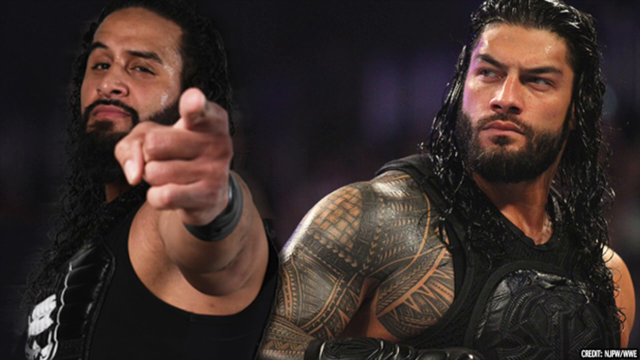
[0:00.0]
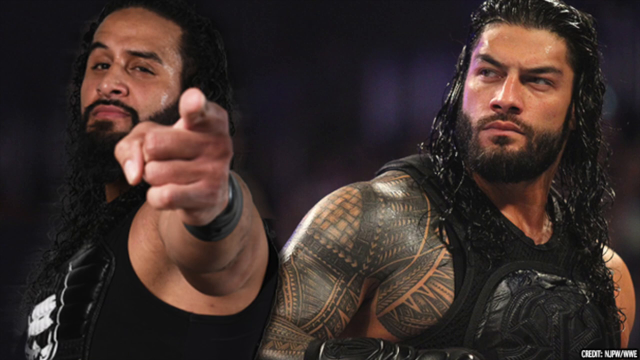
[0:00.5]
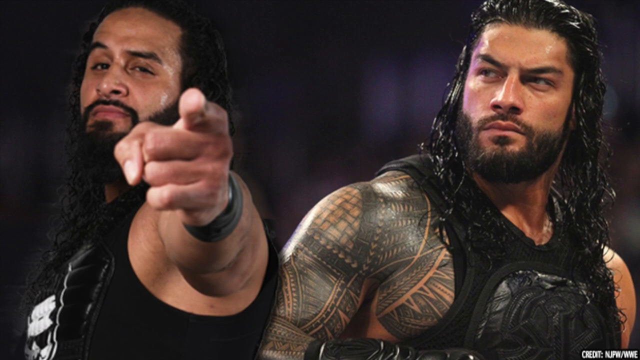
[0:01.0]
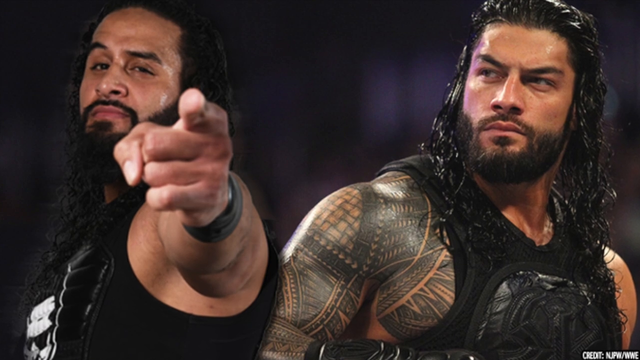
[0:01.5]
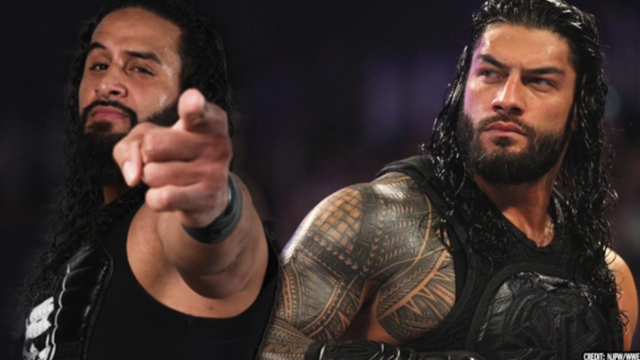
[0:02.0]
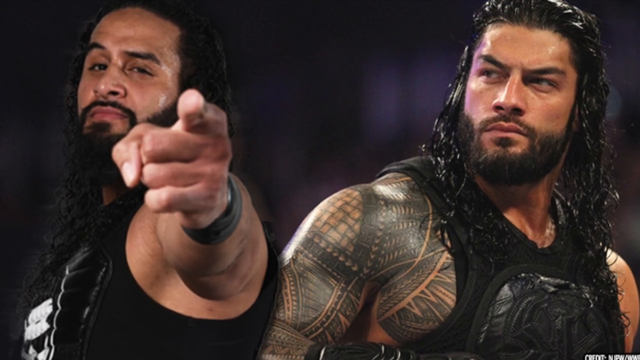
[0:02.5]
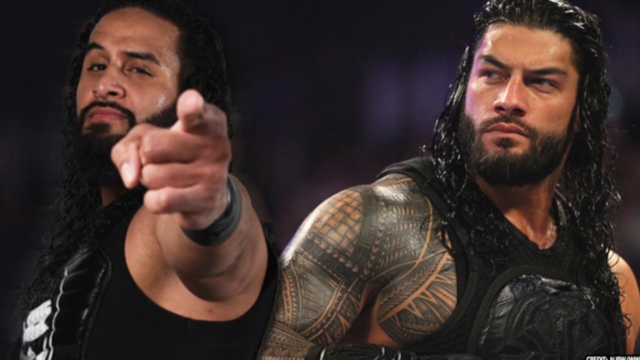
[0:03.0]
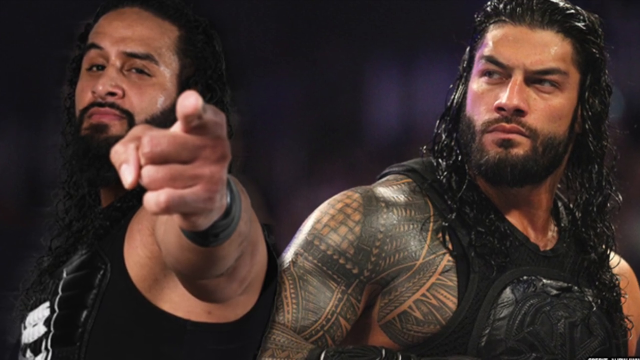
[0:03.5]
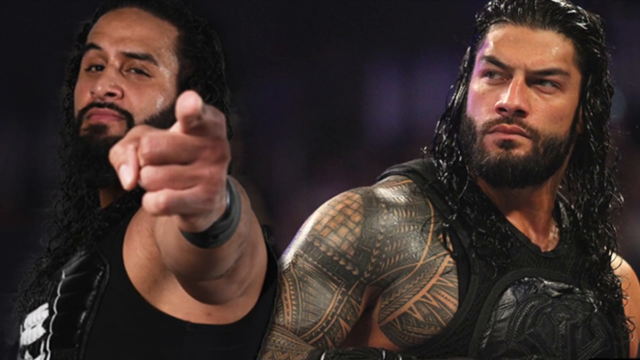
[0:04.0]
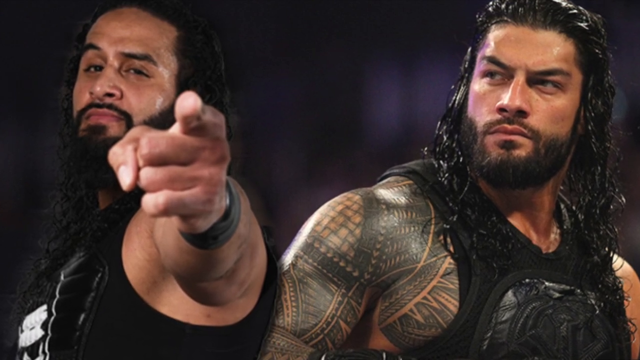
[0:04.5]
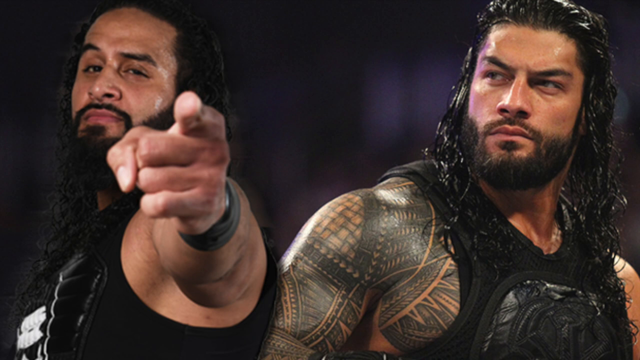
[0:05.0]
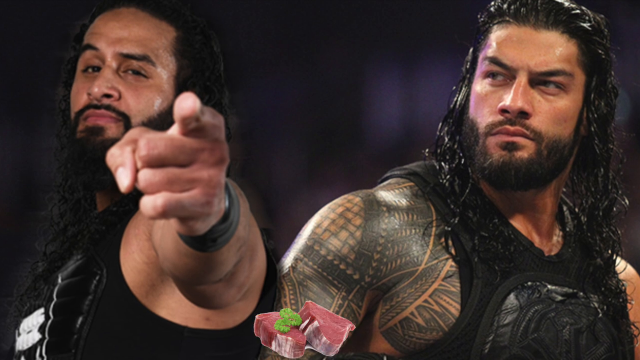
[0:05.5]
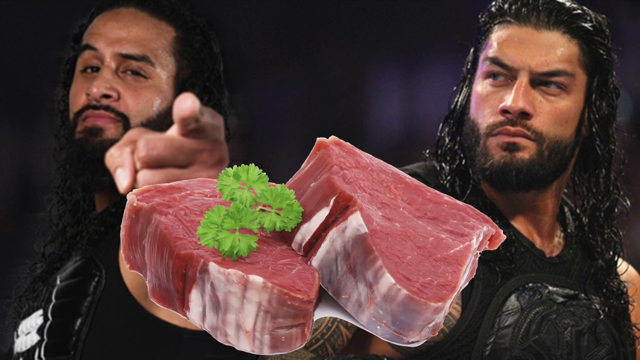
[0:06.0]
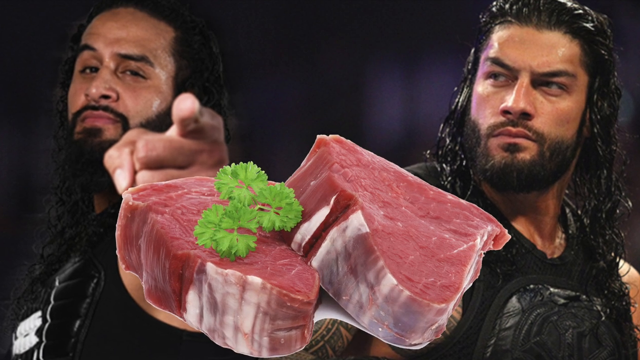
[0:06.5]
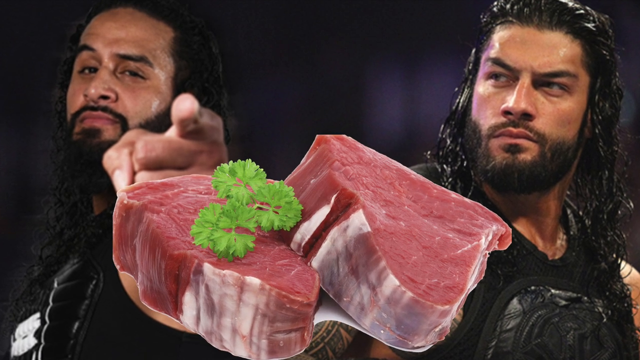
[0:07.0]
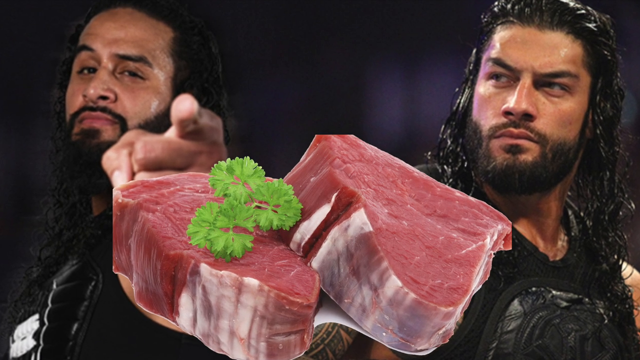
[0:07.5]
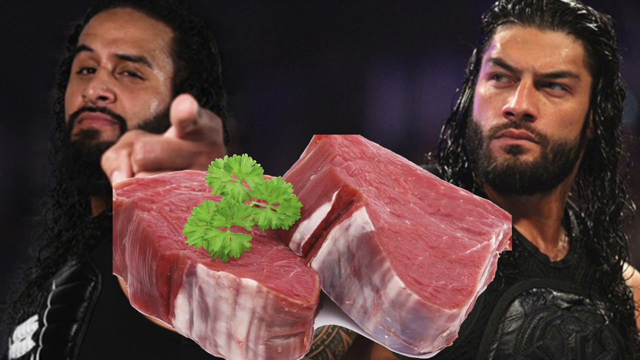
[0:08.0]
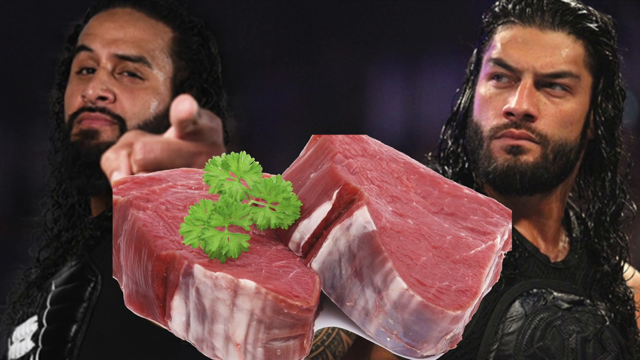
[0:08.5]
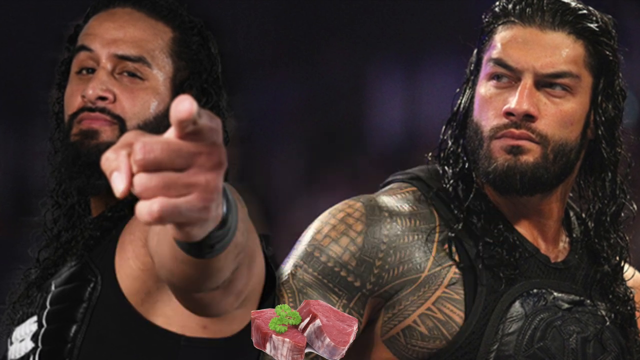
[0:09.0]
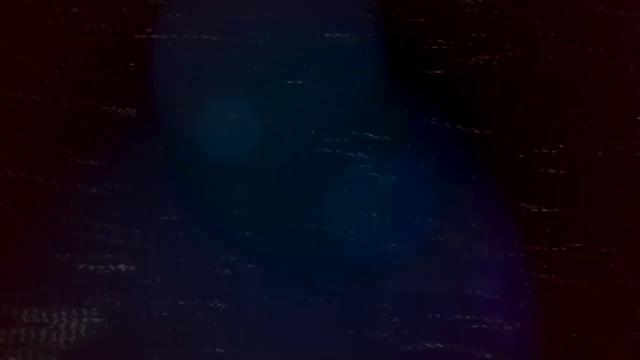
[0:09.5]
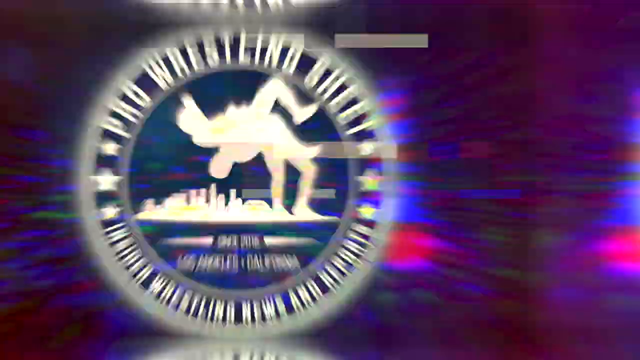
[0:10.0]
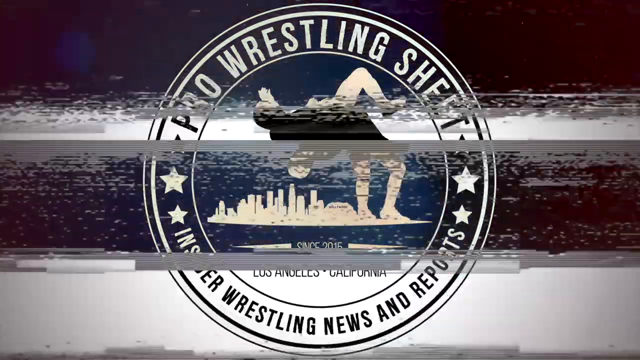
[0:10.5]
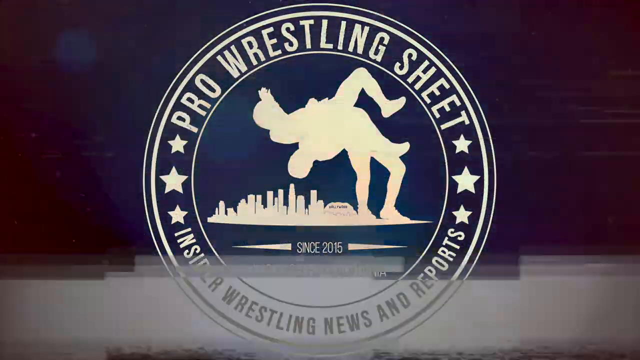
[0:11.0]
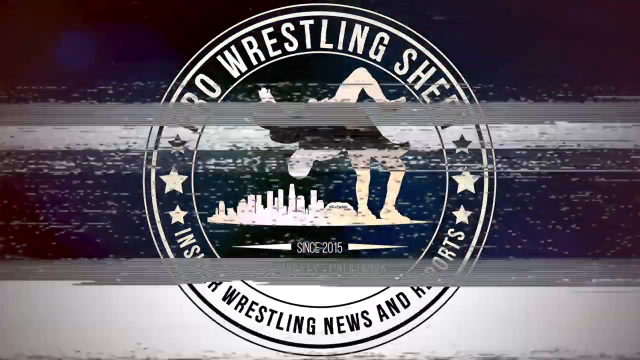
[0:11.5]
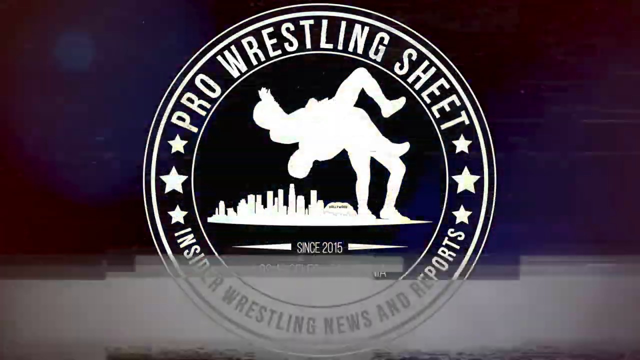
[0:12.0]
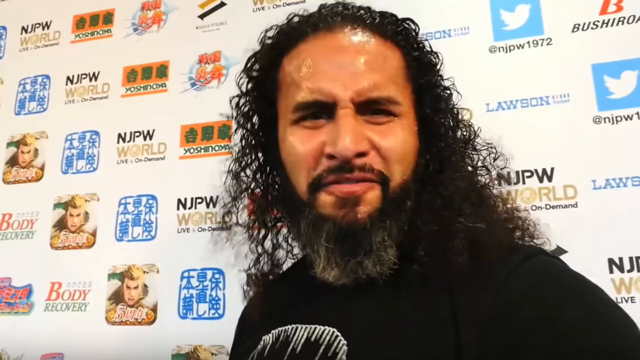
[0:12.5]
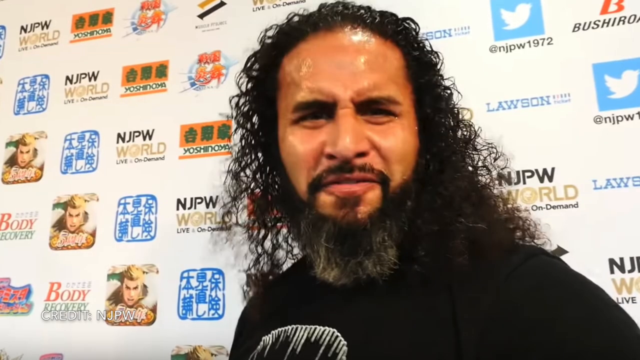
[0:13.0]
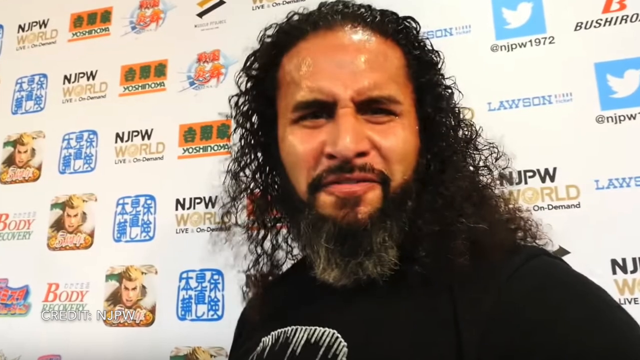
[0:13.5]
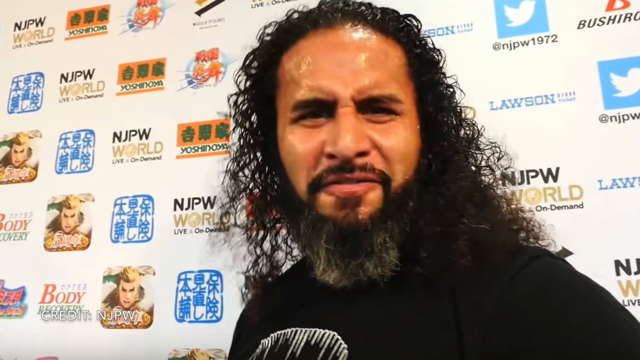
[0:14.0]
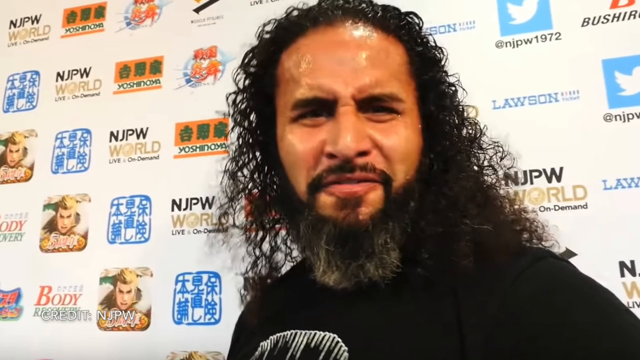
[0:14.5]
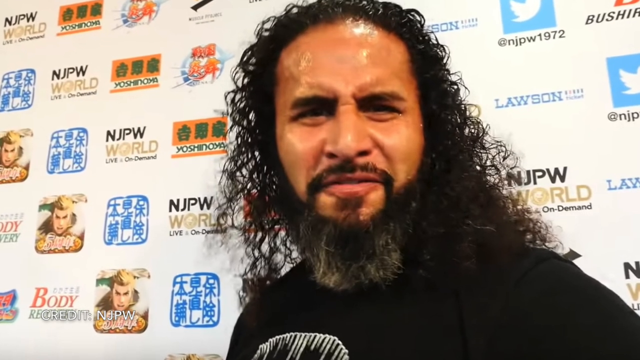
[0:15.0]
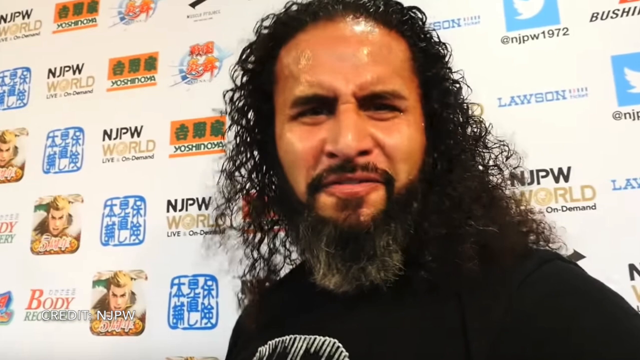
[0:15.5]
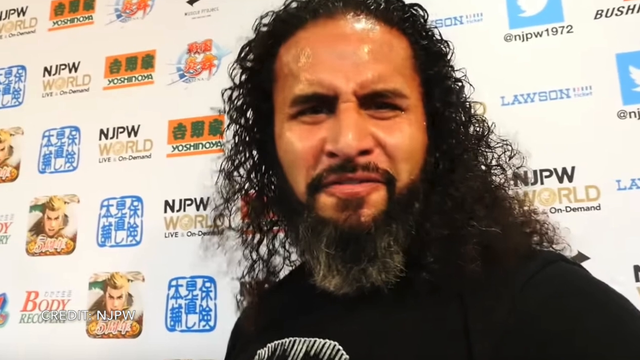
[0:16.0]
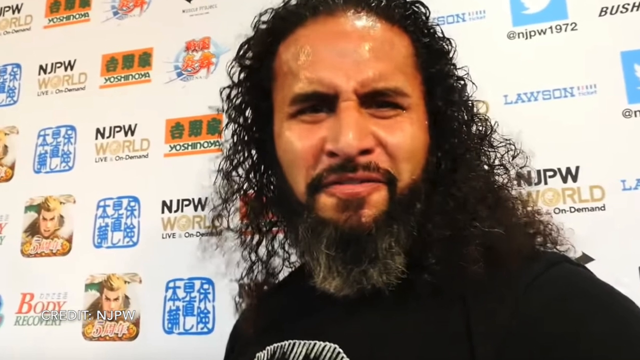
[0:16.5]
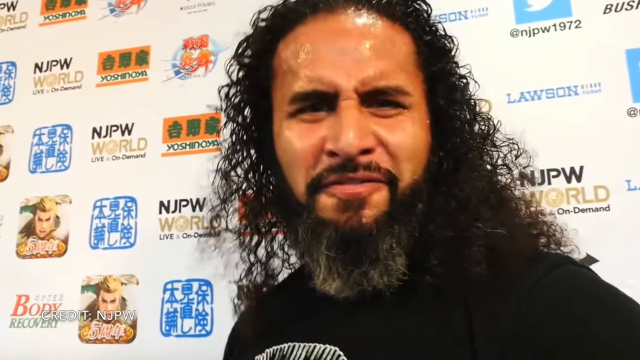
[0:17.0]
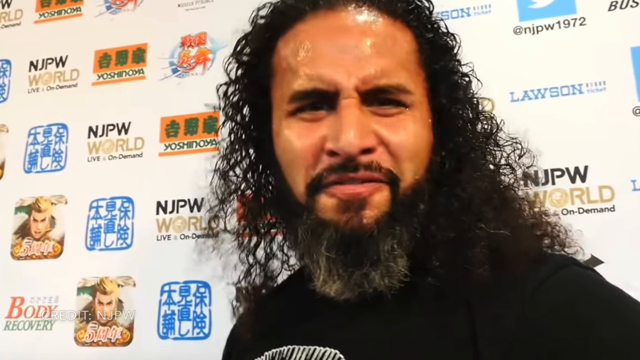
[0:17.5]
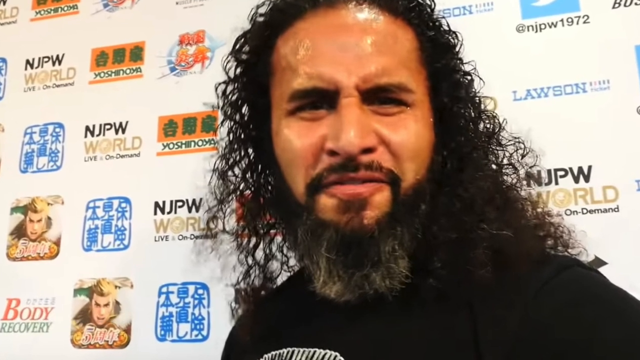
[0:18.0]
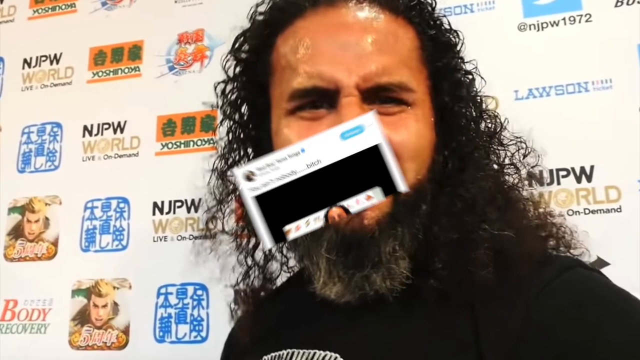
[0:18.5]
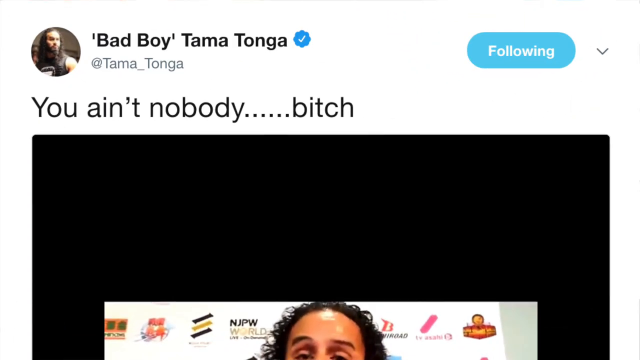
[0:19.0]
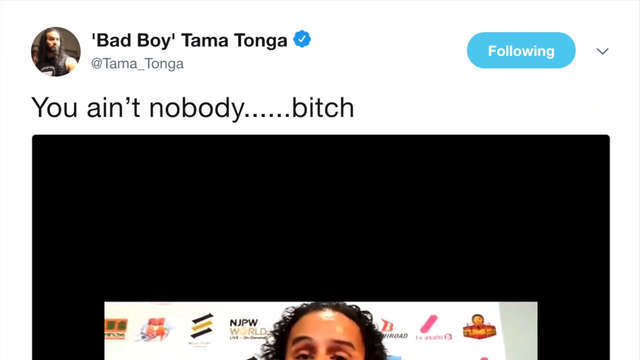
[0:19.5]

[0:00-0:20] A picture shows two guys pointing toward the camera. Both appear to be WWE wrestlers, and both have beards and long hair; they could be the same person. One is wearing a vest and the other is wearing something like a tank top. The video cuts to two raw, uncooked steaks in the forefront with a piece of parsley on top. Next comes a logo that says "pro wrestling sheet" on the top in white text, with a silhouette of two people wrestling in the middle and a cityscape in the background. It then cuts to what looks like a wrestler with long curly hair and a black beard that is a grayish color at the bottom by his chin, wearing a black shirt. He is standing in front of what kind of looks like a sign with a bunch of logos on it. A Twitter post then appears, showing the name of the person who posted it: "Bad boy Tama Tonga".